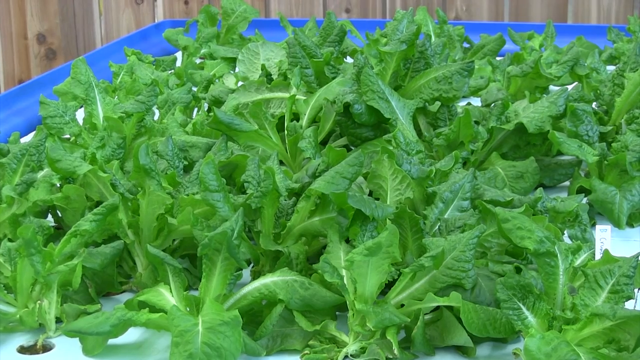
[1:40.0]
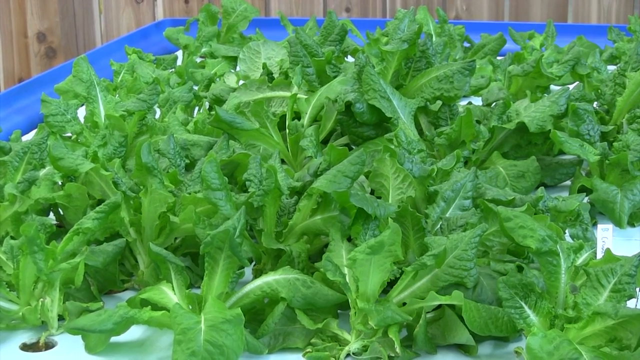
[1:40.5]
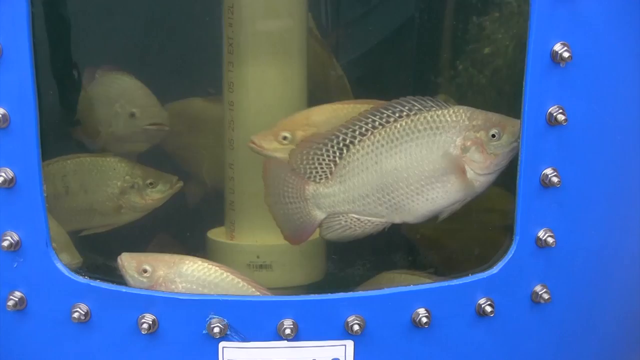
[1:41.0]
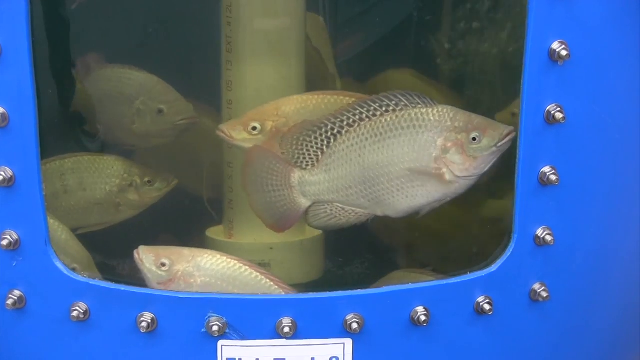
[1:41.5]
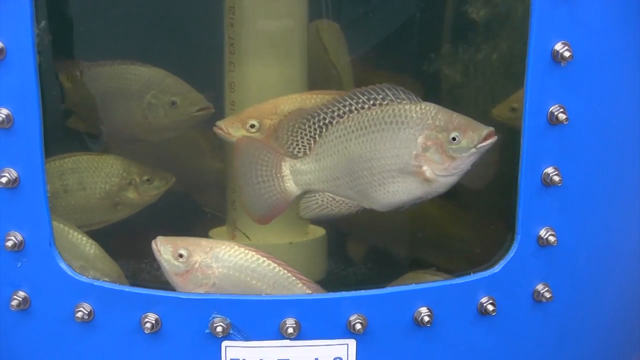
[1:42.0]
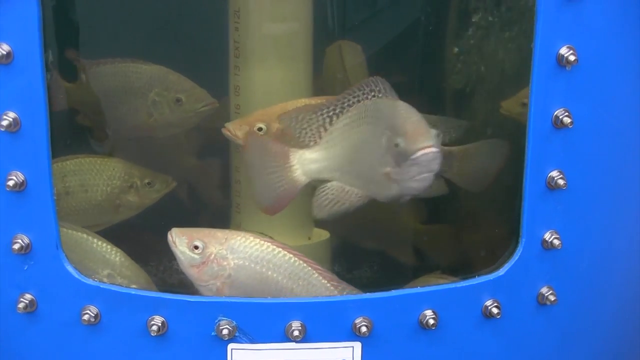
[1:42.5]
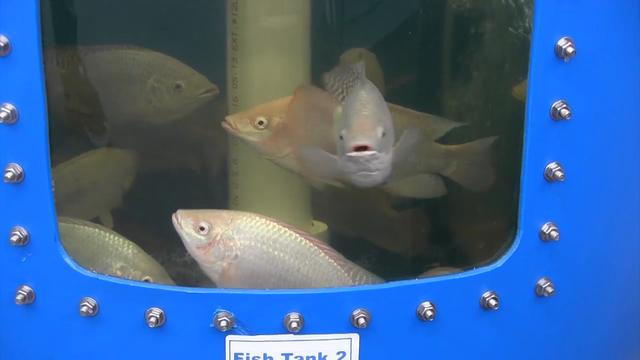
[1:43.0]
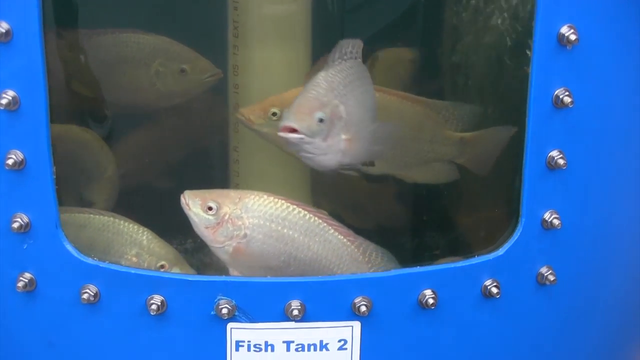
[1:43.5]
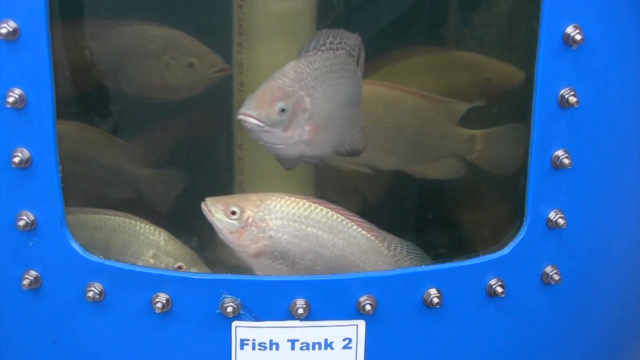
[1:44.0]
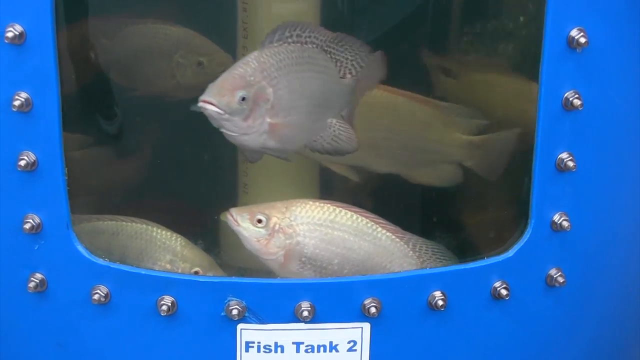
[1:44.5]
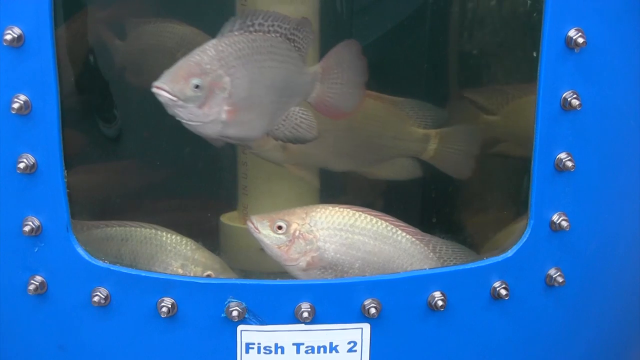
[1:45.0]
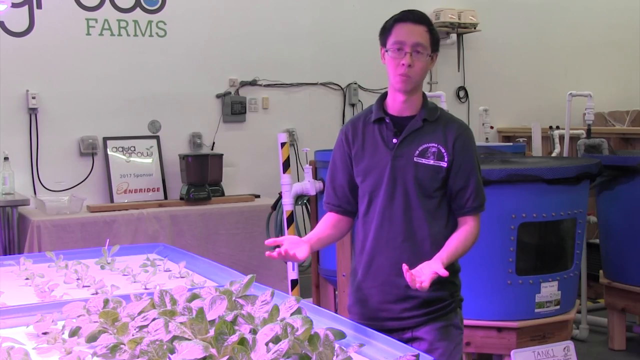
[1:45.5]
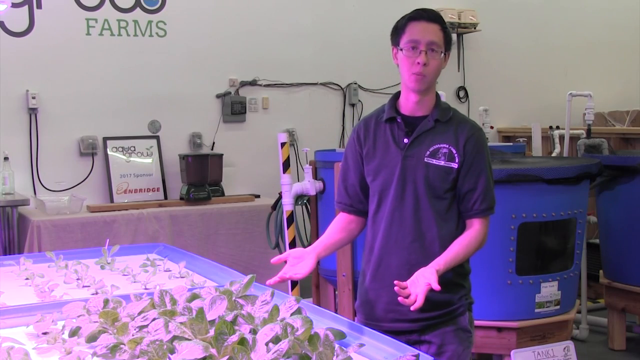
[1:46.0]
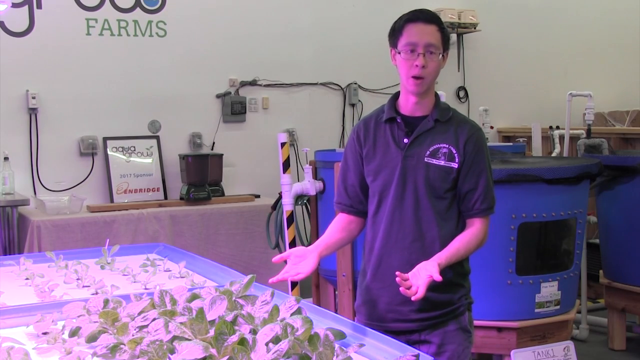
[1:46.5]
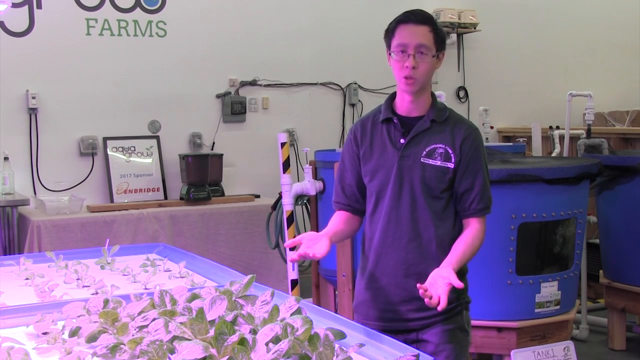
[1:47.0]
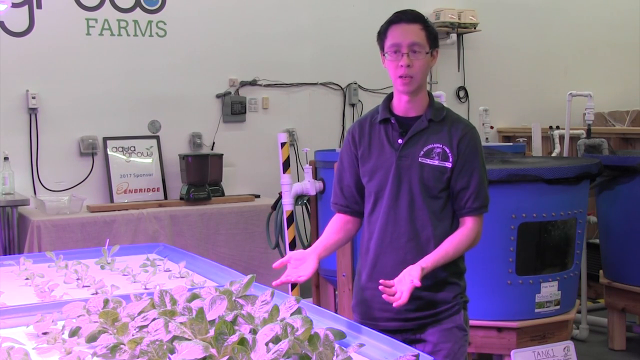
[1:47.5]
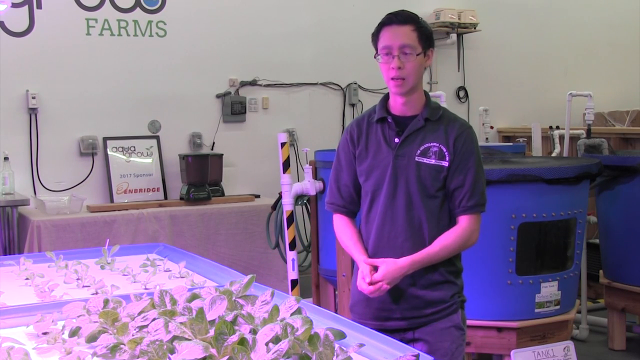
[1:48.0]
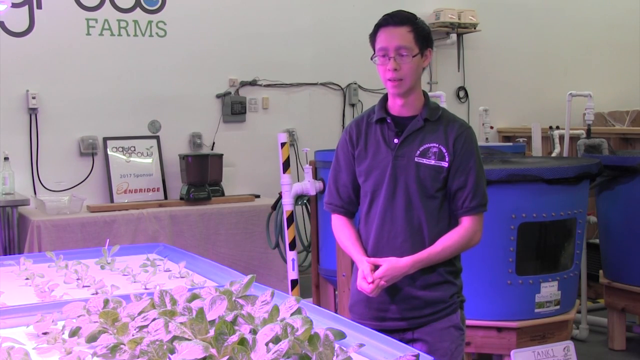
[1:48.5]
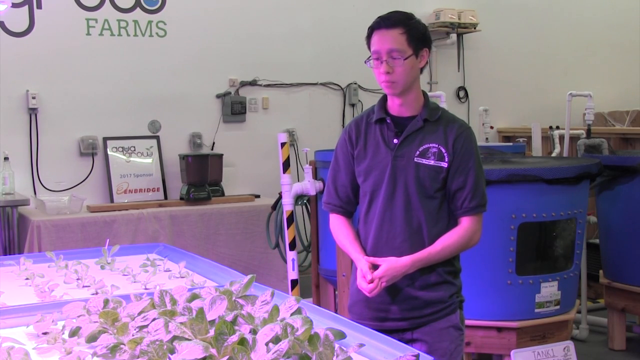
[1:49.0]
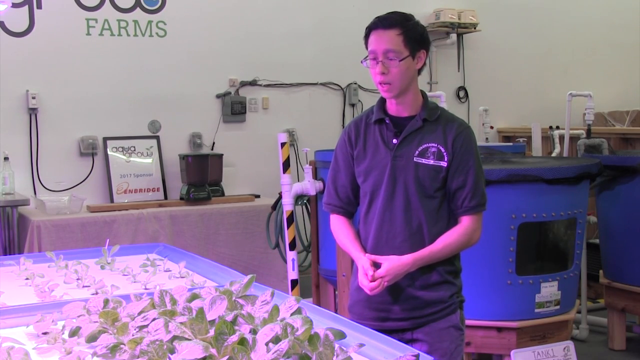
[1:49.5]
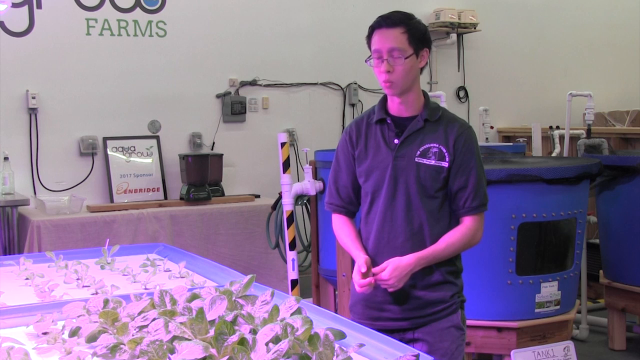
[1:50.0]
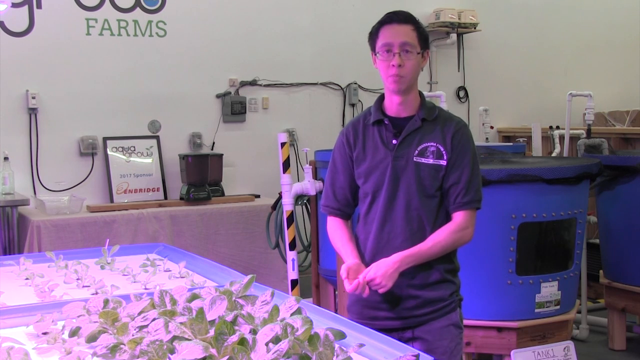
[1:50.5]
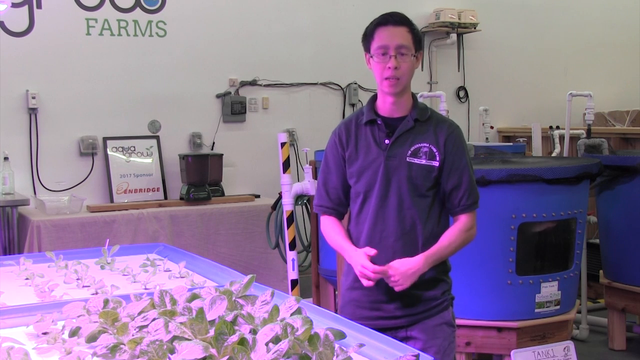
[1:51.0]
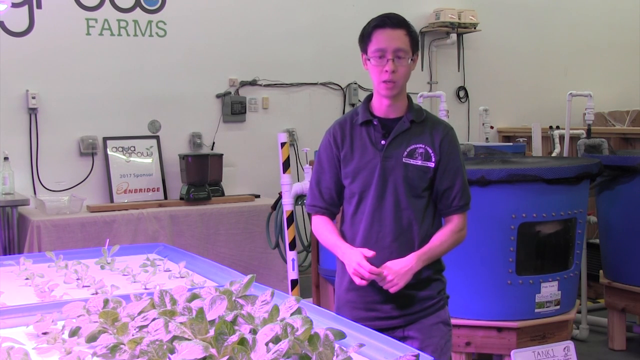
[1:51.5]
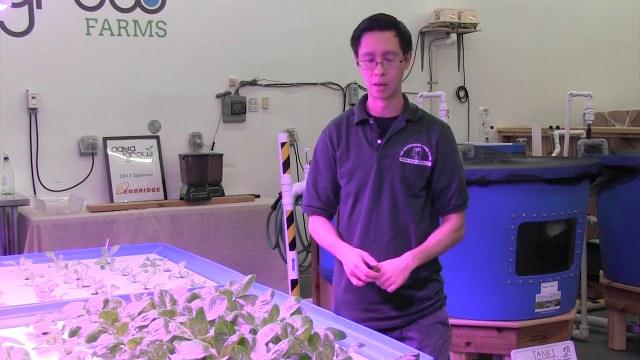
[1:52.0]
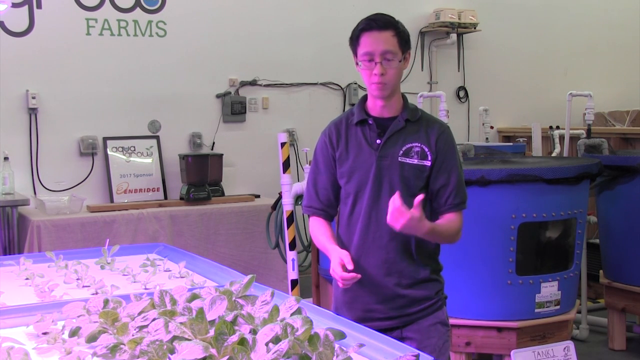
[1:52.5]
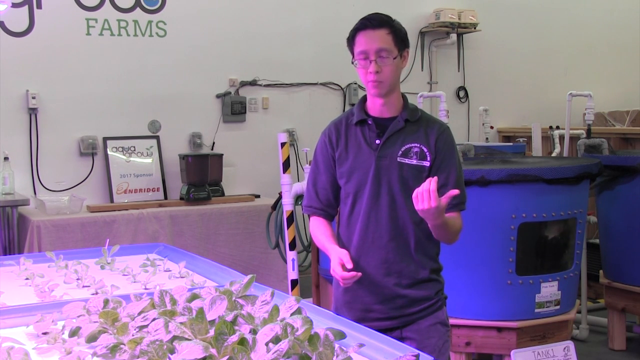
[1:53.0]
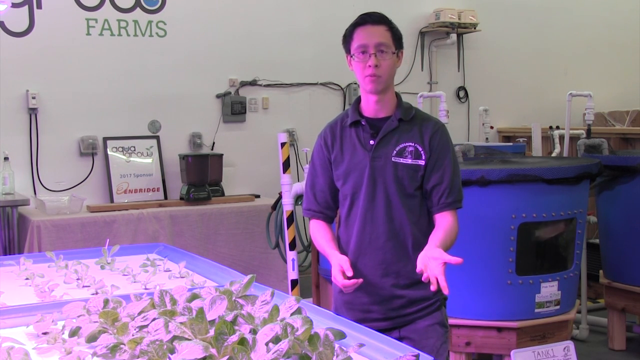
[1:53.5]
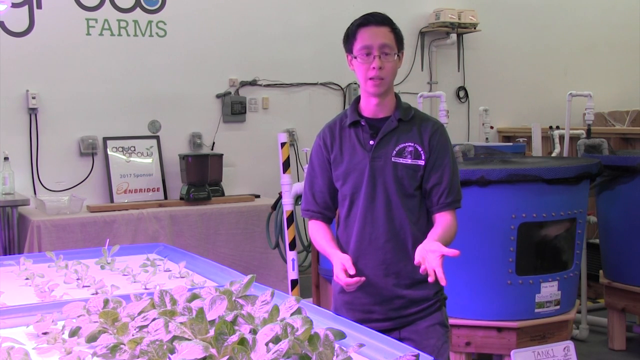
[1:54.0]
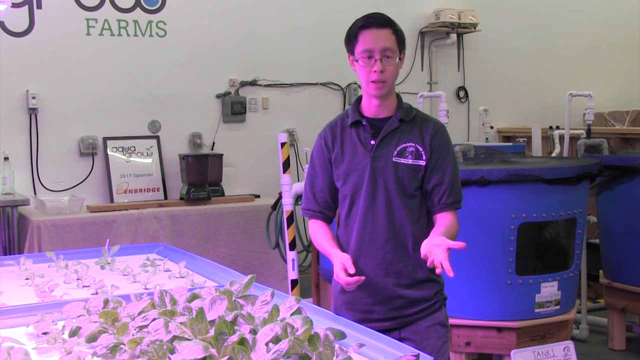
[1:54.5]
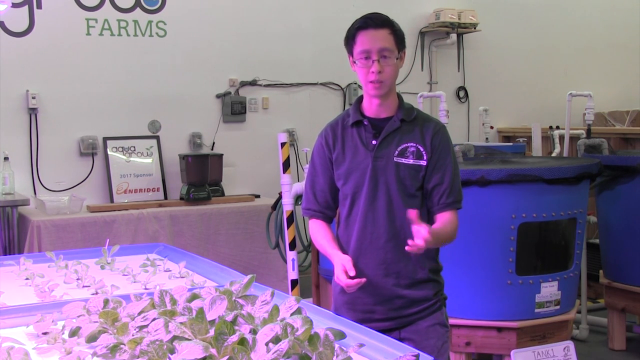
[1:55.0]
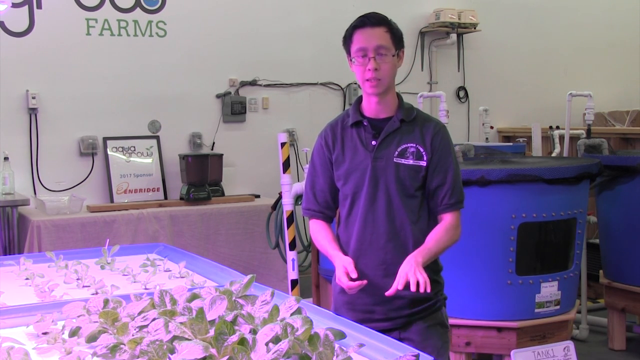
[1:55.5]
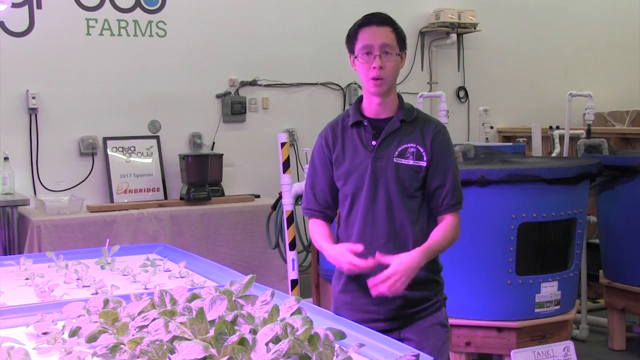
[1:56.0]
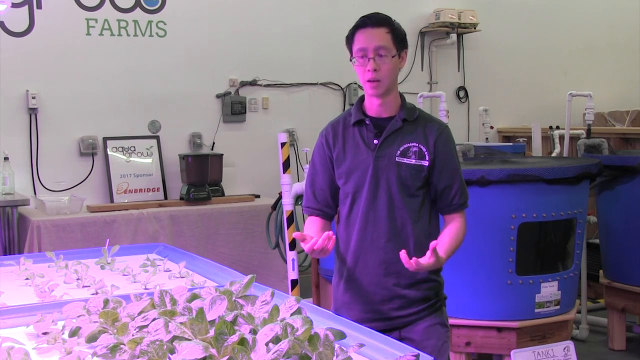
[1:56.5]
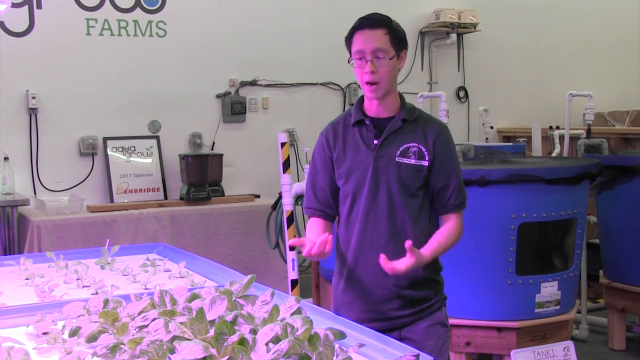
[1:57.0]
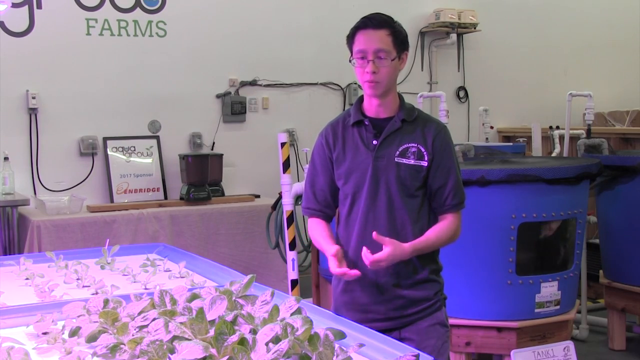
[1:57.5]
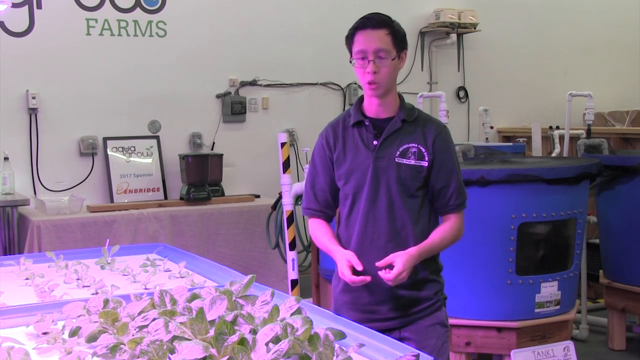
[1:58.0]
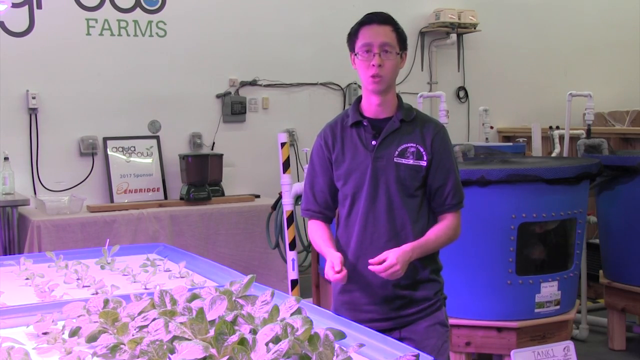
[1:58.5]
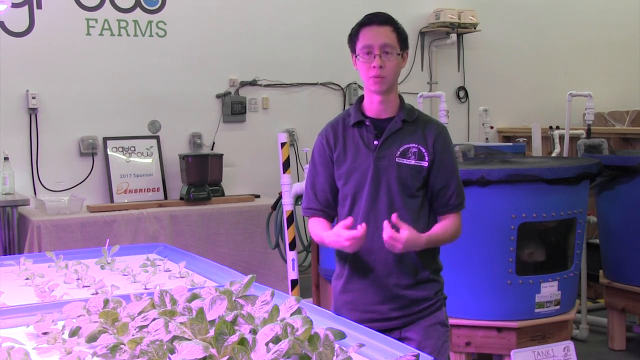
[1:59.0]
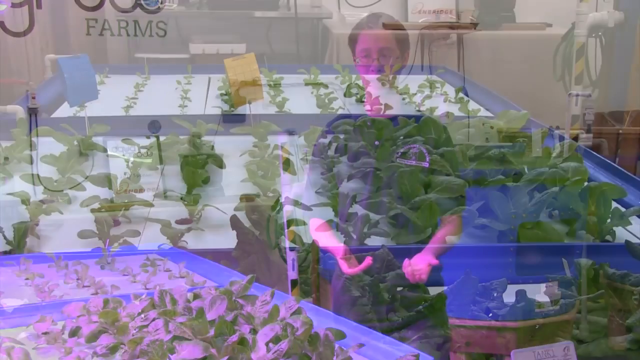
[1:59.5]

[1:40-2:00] The mature greens, looking like leaf lettuce, possibly mustard greens or spinach, float on the foam above the fish farm, which has a blue rim. A fish tank bears a small white sign reading "Fish Tank 2" and has a clear porthole through which the same silver white fish swim; their big eyes with a small black dot and silver rim make them look permanently startled. The Asian employee talks over the trays. He is rather thin, with short, close-cropped hair and rimless glasses with black on the sides, and wears a baggy Mississauga Food Shelf polo shirt; he looks Japanese or possibly Chinese. He holds his hands nervously and gestures in the air, apparently explaining how the trays work. Behind him, an Aqua Grow Farms 2017 sponsor sign in a black frame leans against the wall. Two other big blue barrels that are fish tanks are visible.